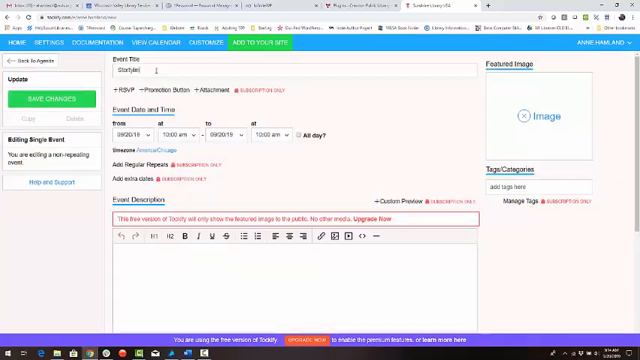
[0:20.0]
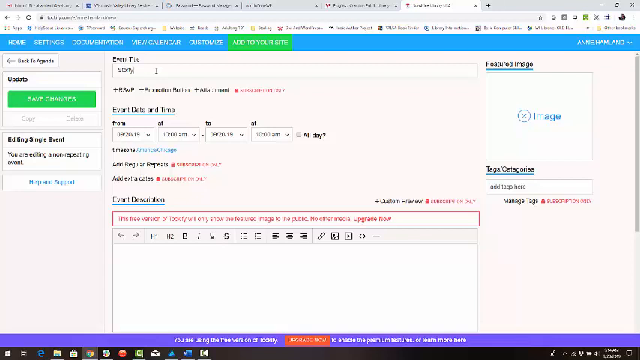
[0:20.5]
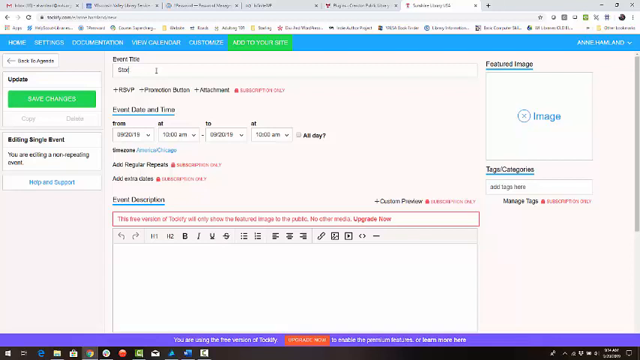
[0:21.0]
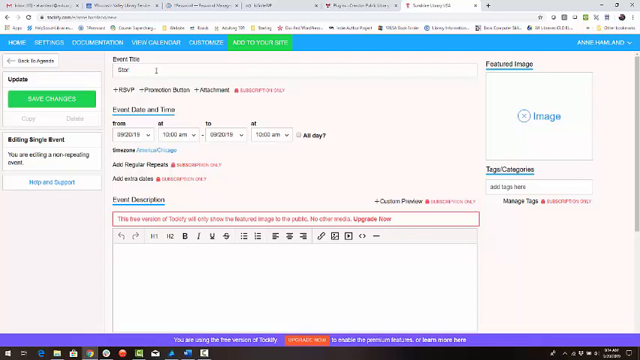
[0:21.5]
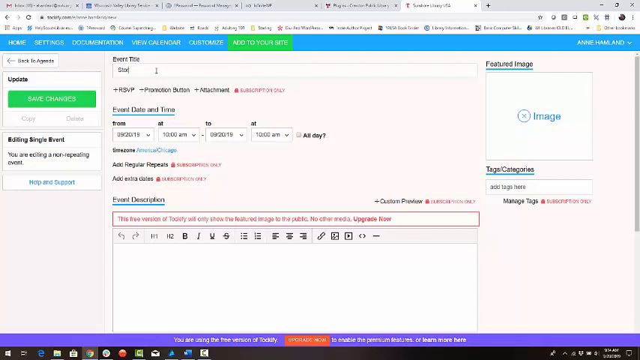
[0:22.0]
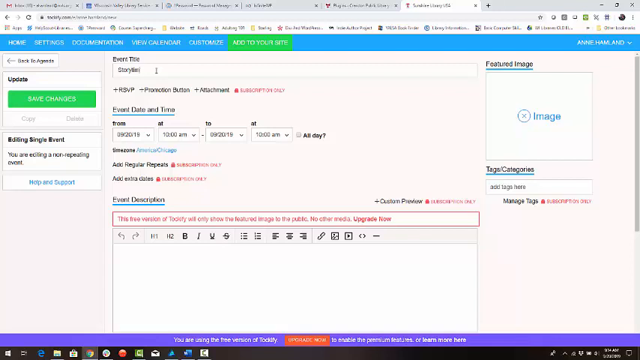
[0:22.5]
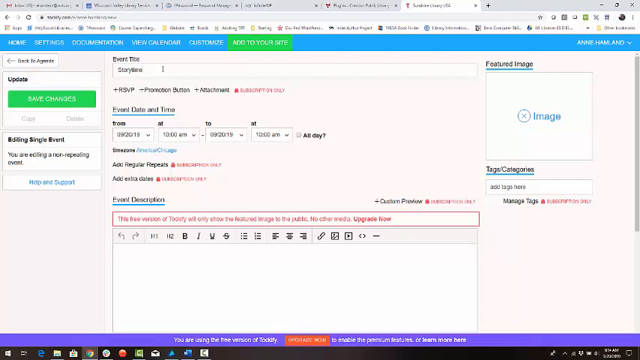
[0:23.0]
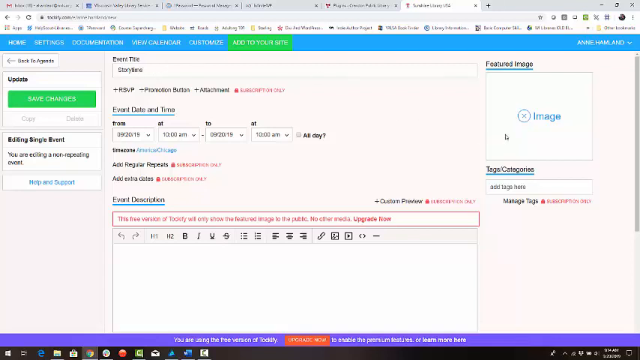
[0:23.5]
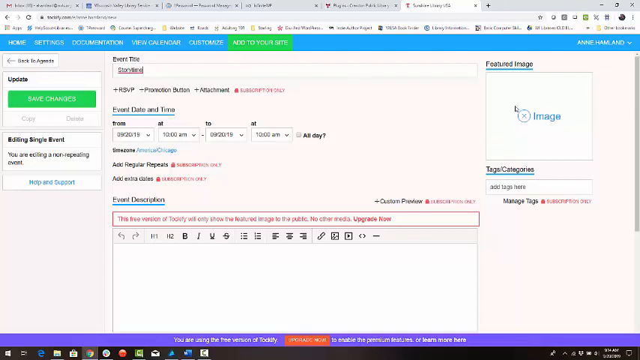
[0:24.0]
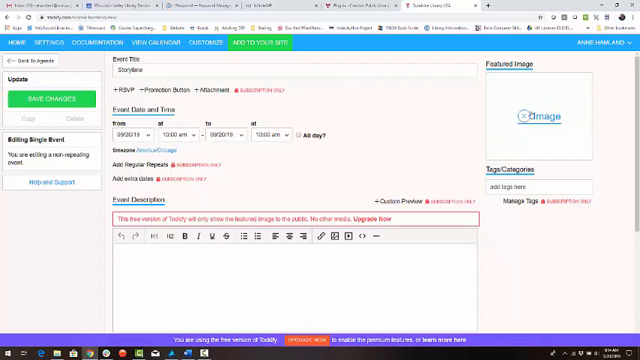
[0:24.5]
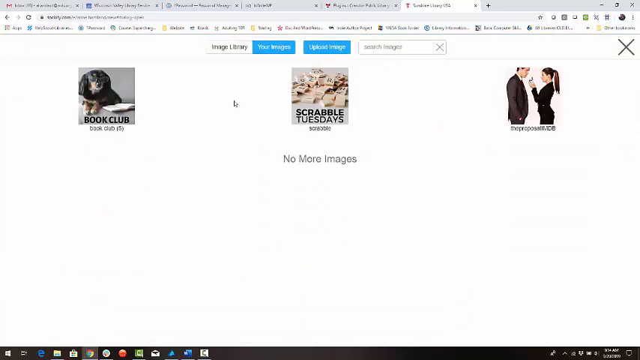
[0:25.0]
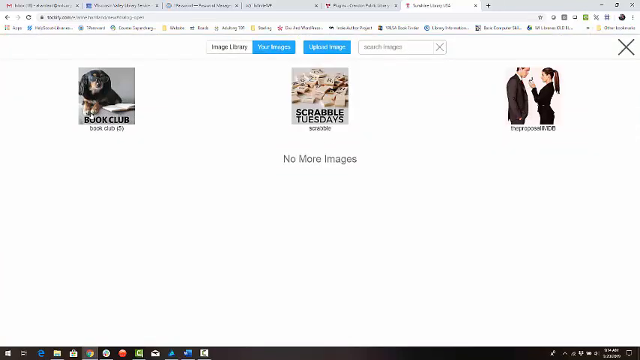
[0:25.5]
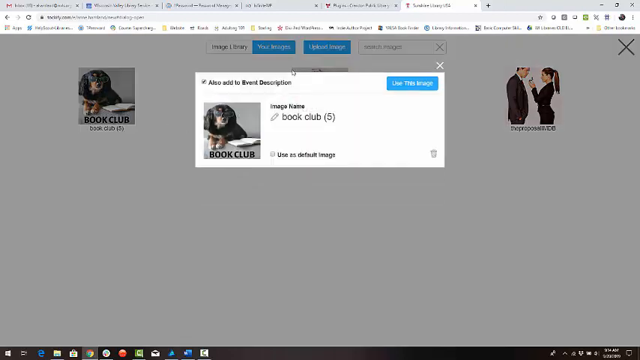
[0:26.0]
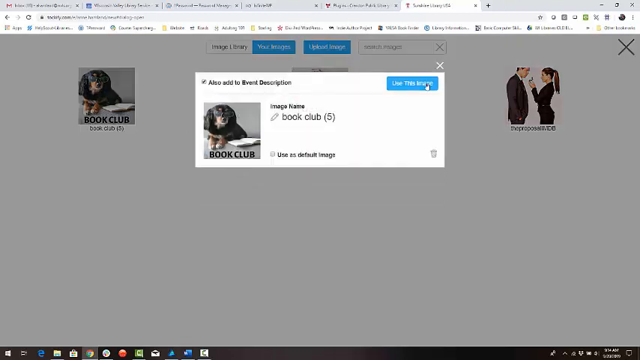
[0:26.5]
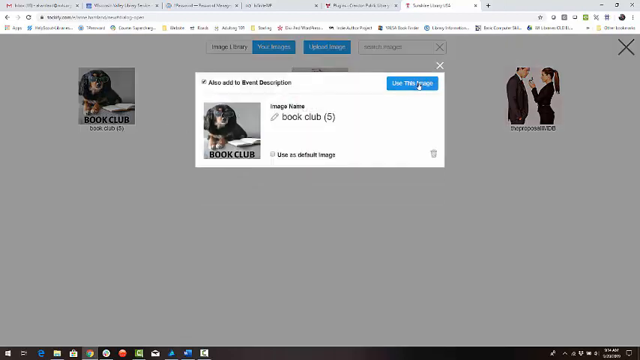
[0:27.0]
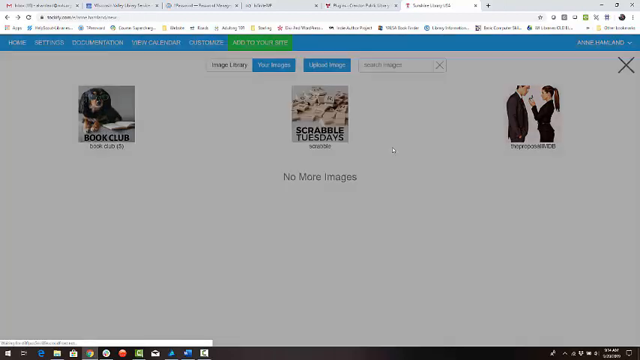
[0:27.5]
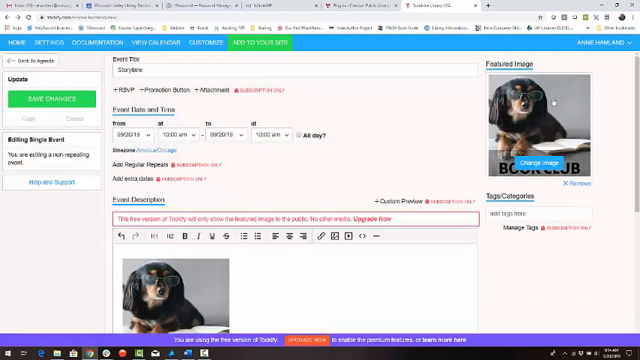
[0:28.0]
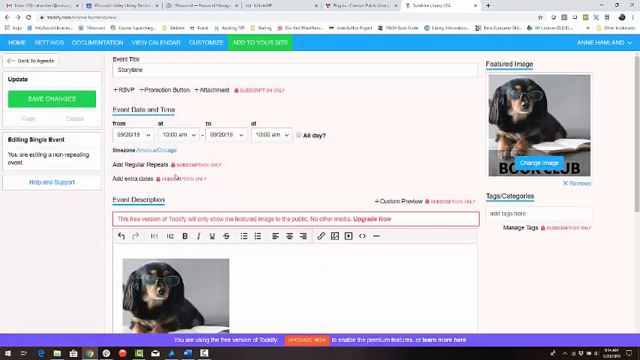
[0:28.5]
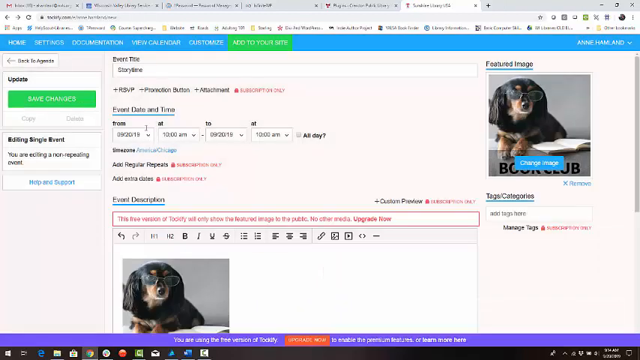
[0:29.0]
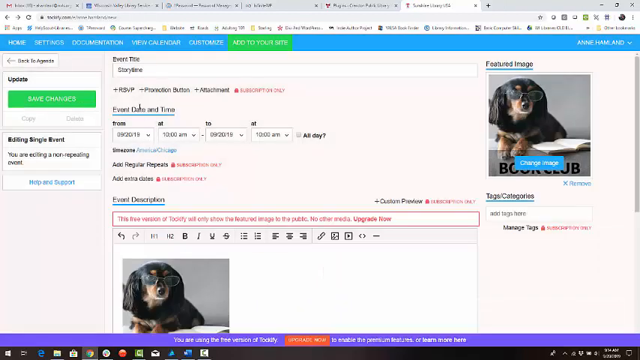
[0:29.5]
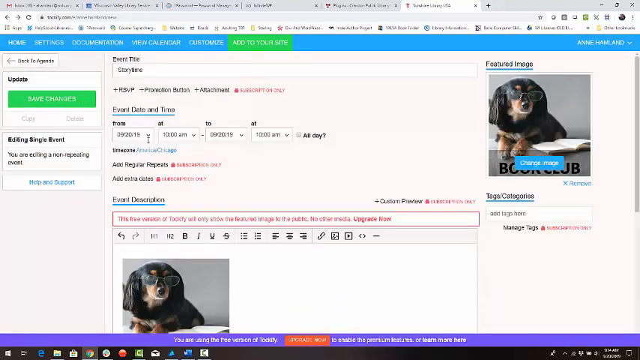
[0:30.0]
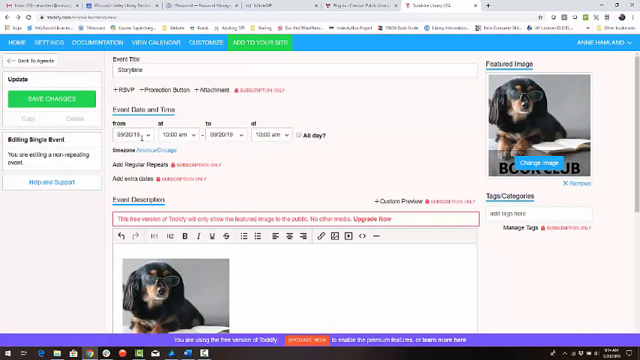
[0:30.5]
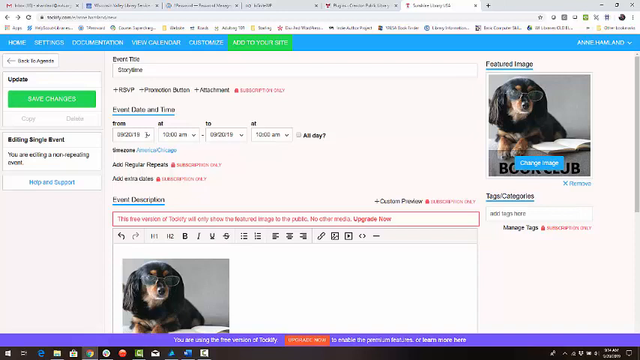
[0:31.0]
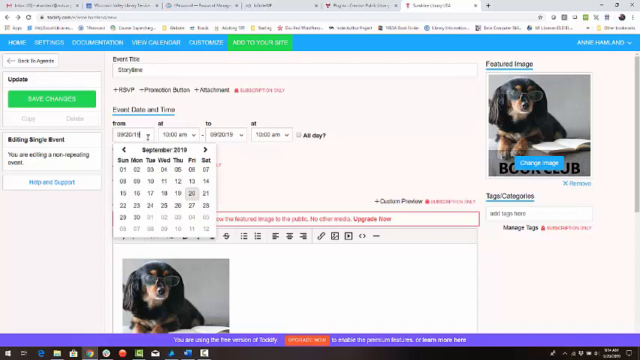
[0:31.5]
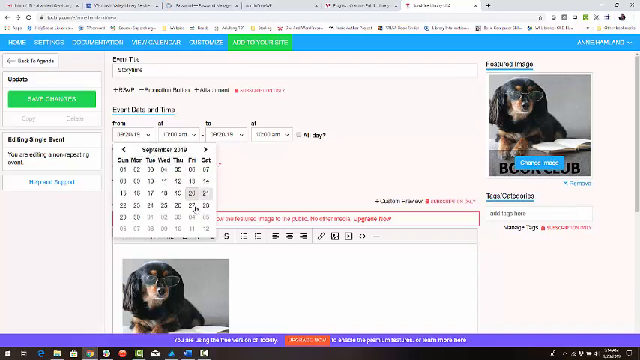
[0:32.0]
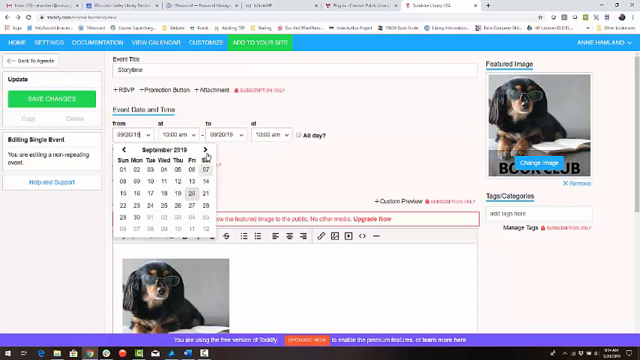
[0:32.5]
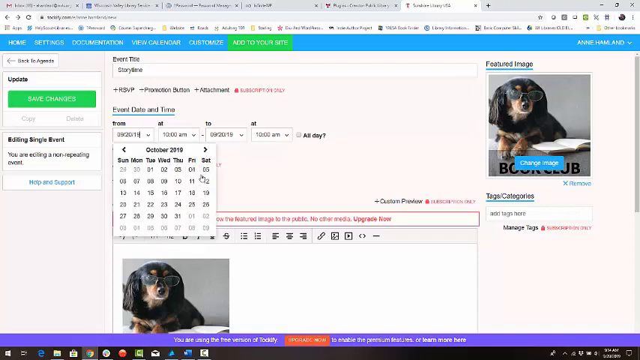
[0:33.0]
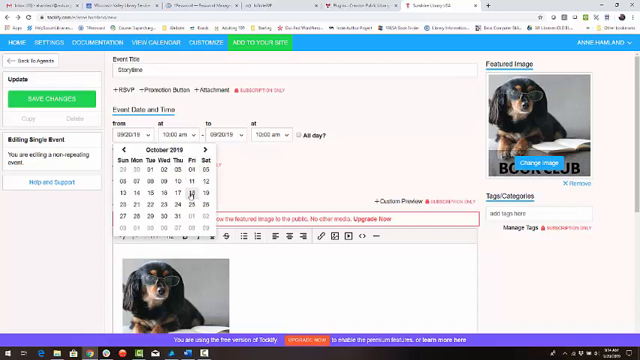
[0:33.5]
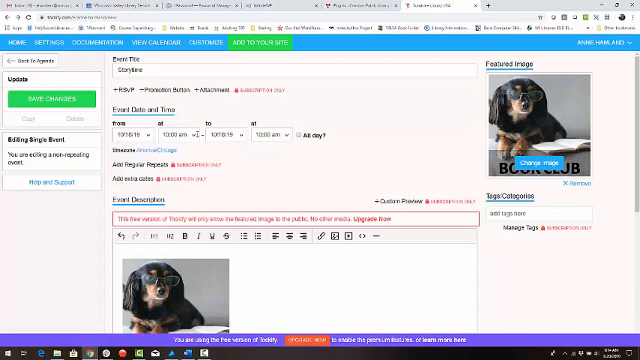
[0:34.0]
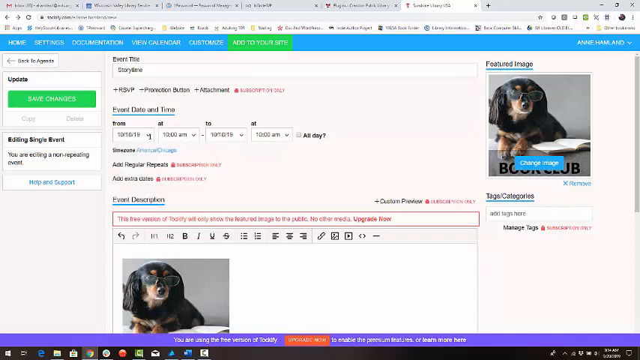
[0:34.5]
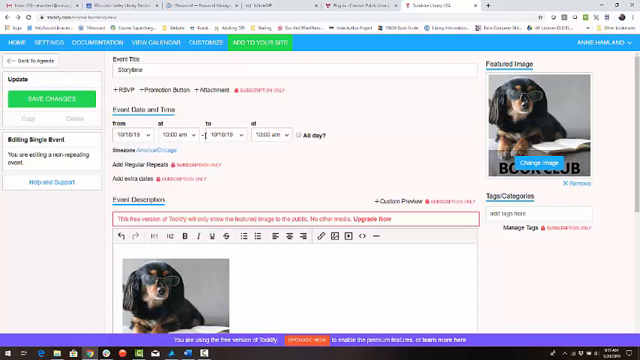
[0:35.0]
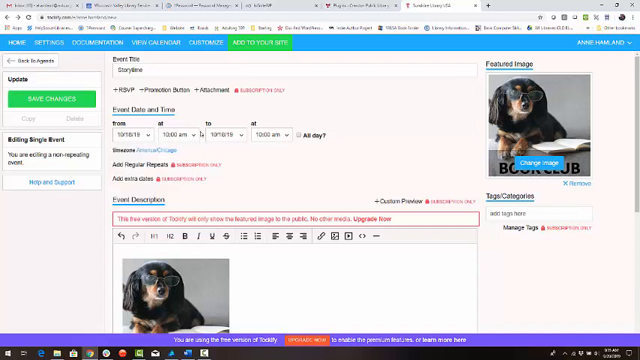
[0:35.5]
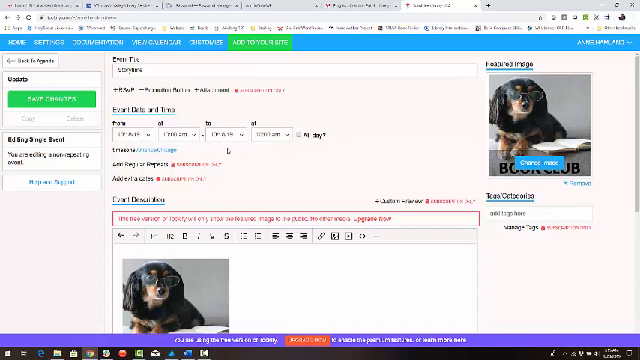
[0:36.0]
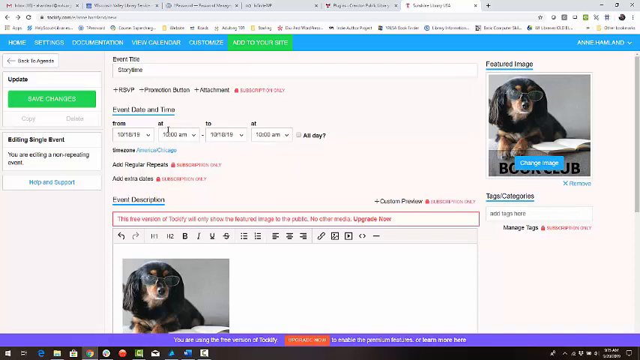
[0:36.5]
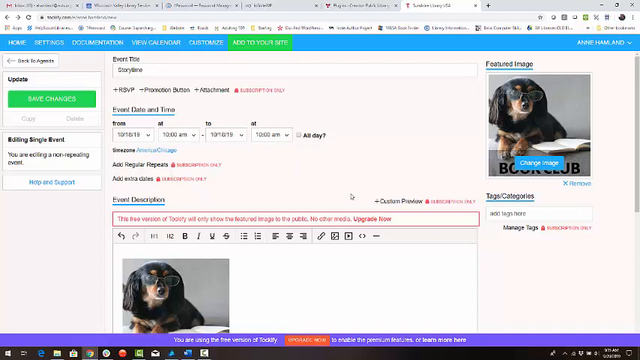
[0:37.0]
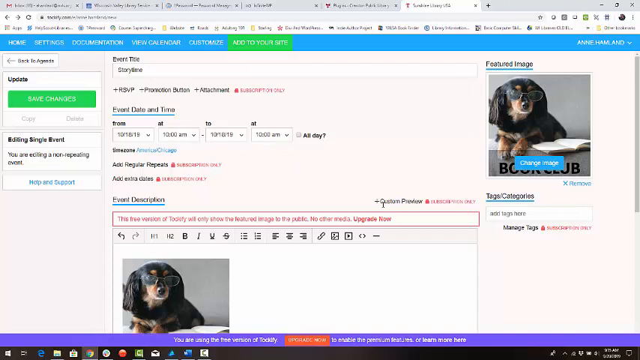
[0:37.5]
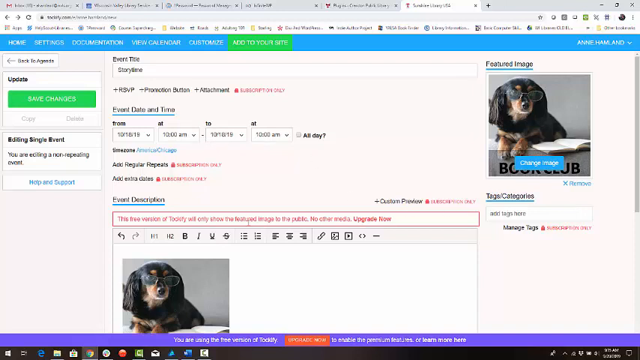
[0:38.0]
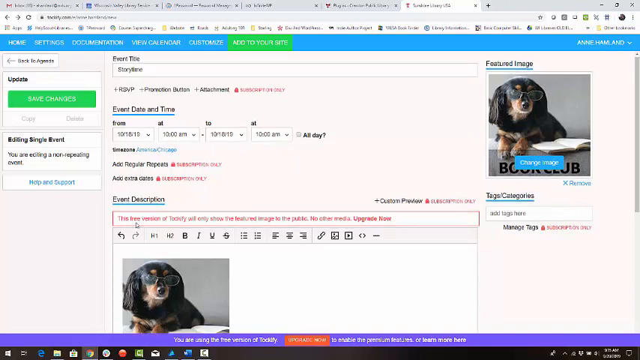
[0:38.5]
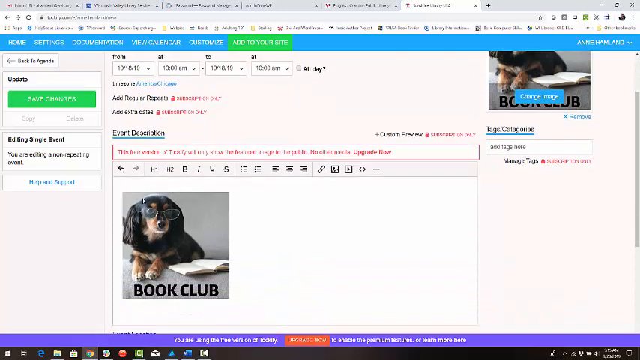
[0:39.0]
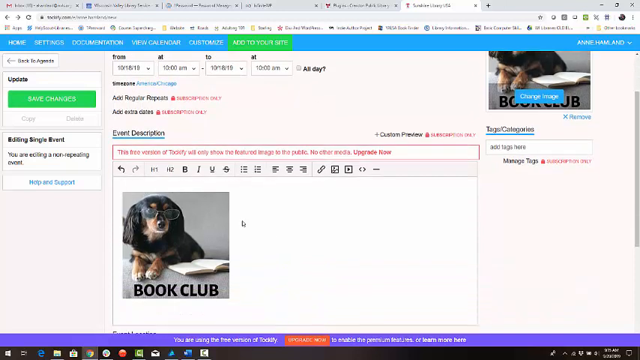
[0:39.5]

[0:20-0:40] Someone types in an input box at the top of a website. They seem to type, erase a couple of letters, and type it again, then hover the cursor on the right side of the screen. The text "featured image" is visible, and they seem to click a blue link reading "image." The site moves to another page, where an image of a dog appears on the left. They click it, and a menu reading "book club" appears in the forefront, with the picture of the dog still visible. They move the cursor over a blue button at the top right of the window and click it, which leads to another page with the dog. They then click a drop-down menu containing a calendar and select something from it.